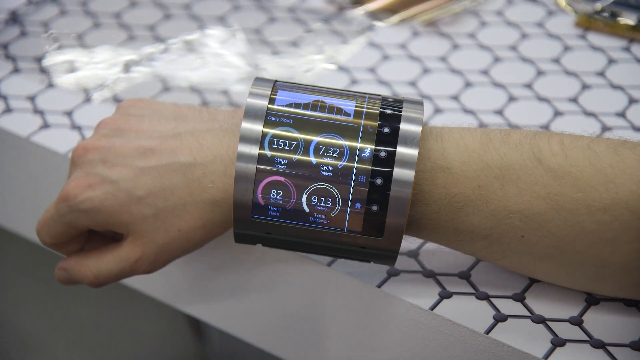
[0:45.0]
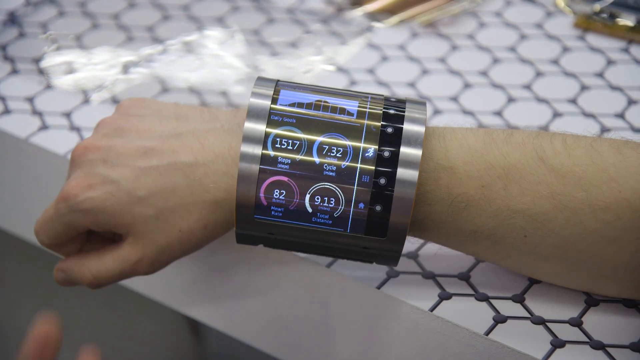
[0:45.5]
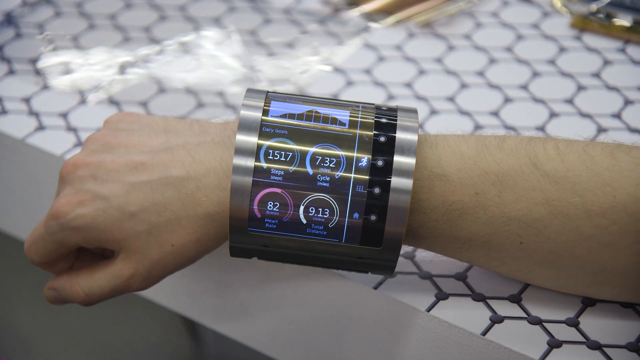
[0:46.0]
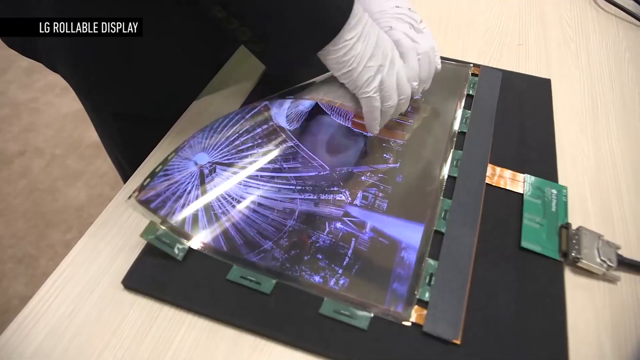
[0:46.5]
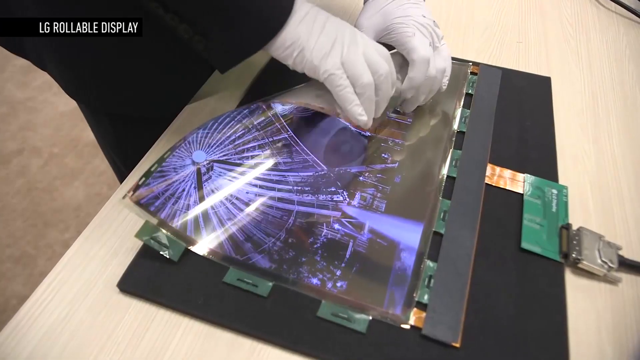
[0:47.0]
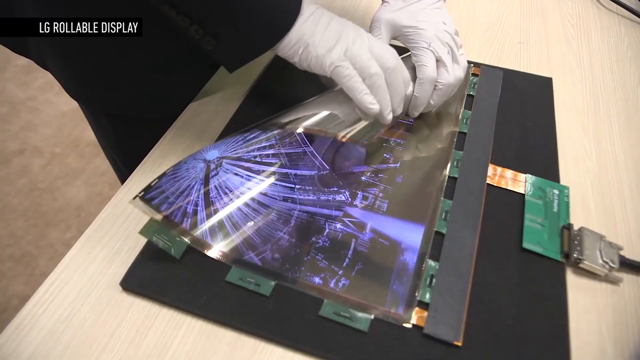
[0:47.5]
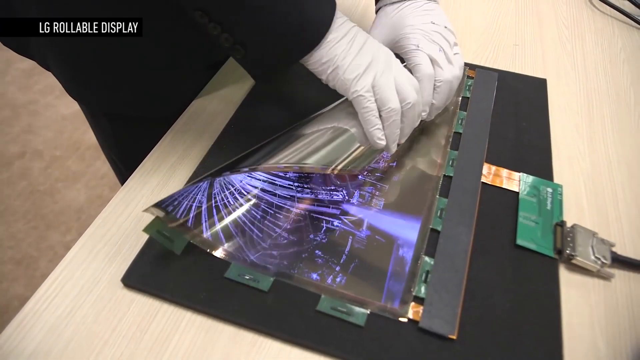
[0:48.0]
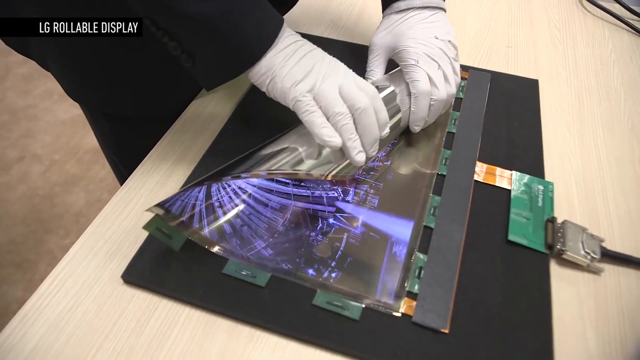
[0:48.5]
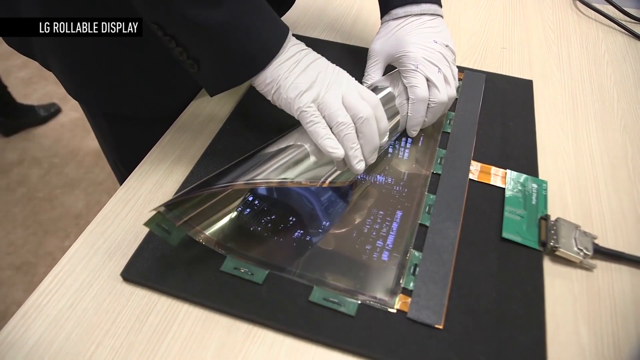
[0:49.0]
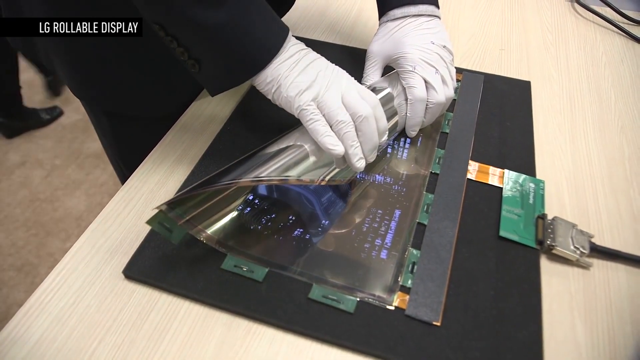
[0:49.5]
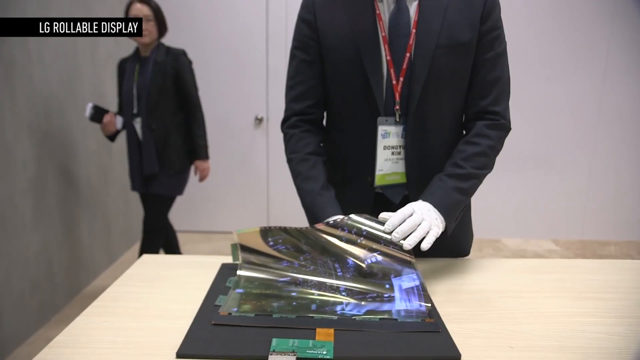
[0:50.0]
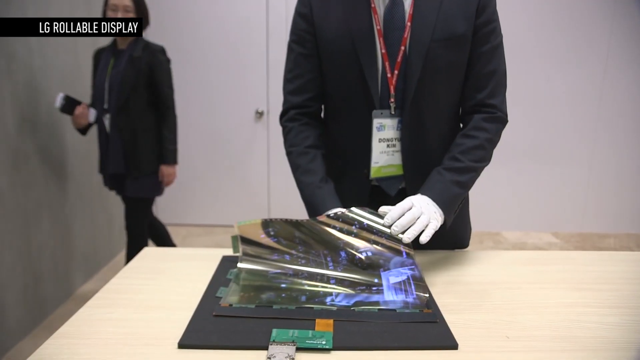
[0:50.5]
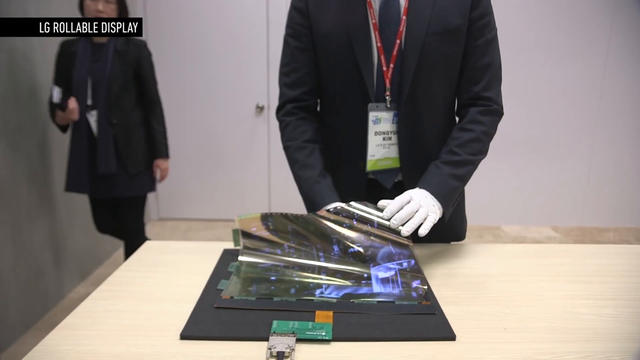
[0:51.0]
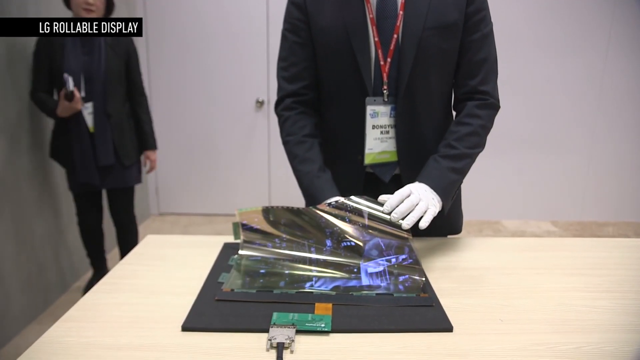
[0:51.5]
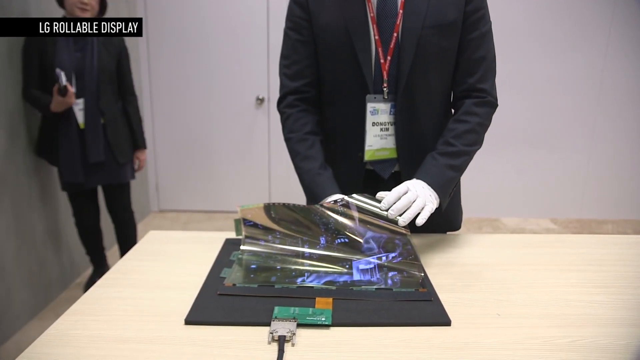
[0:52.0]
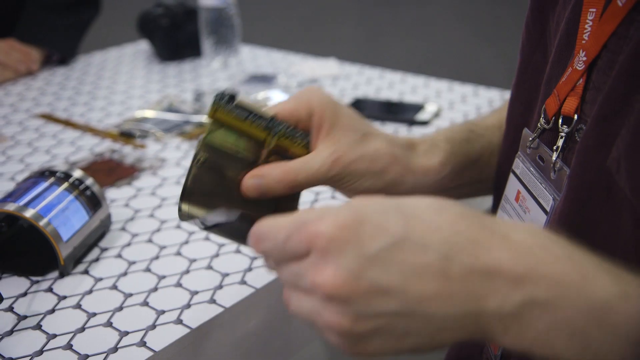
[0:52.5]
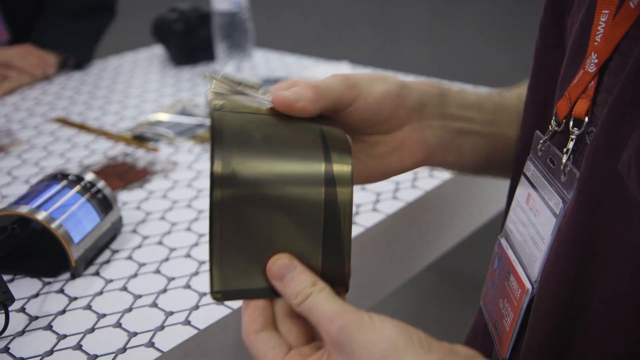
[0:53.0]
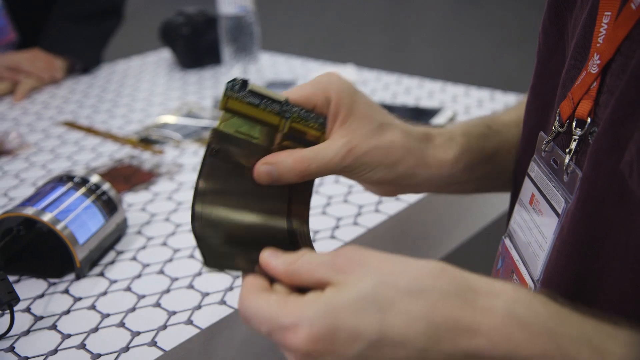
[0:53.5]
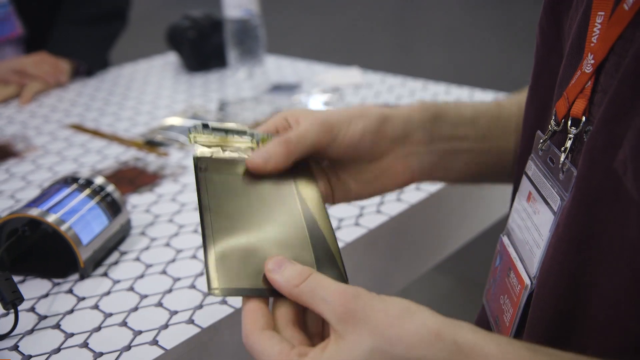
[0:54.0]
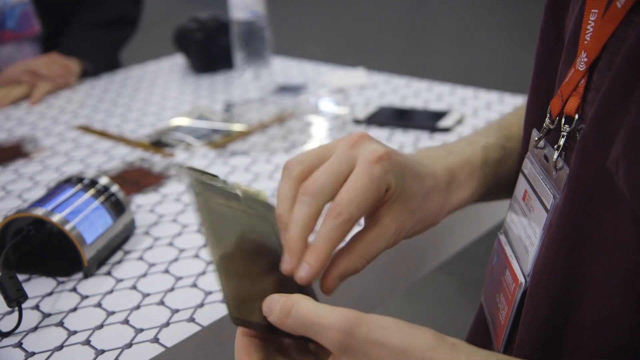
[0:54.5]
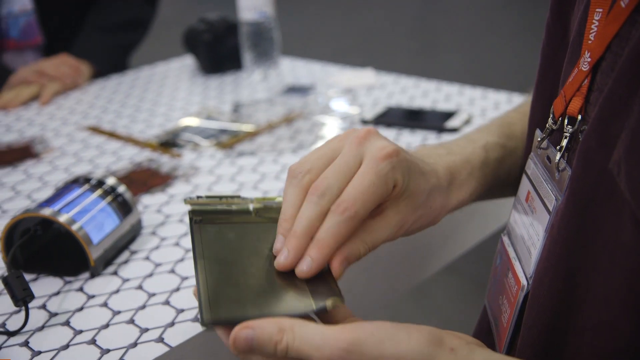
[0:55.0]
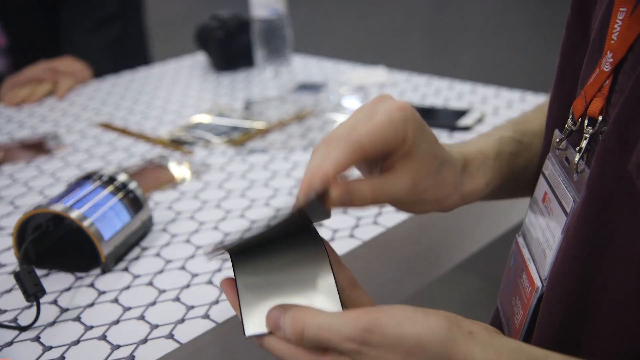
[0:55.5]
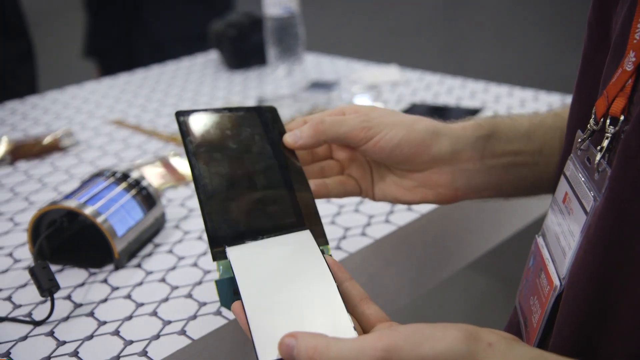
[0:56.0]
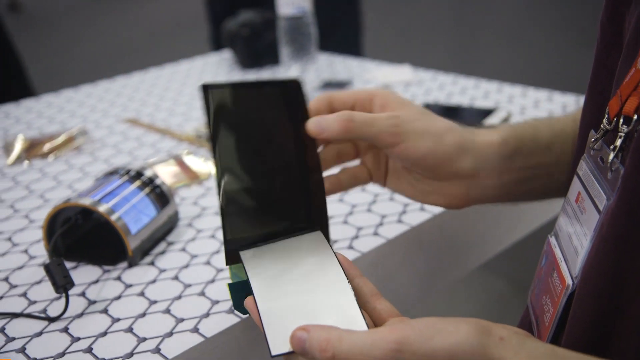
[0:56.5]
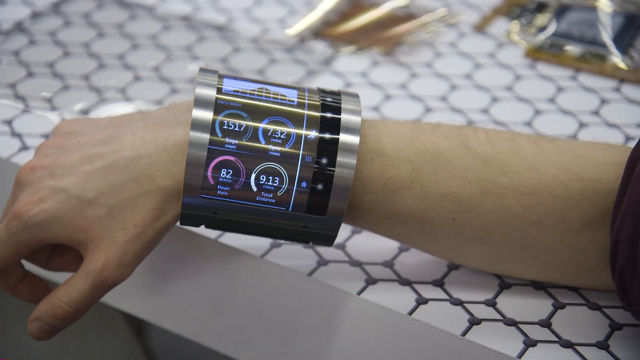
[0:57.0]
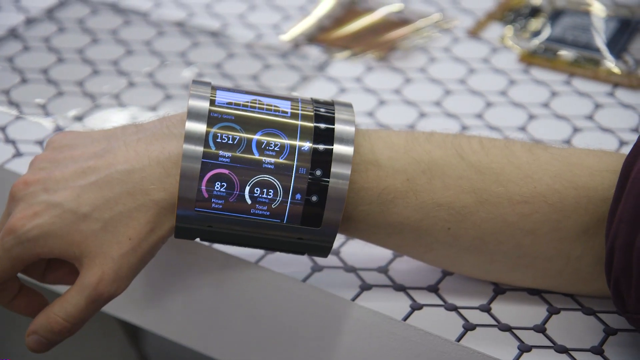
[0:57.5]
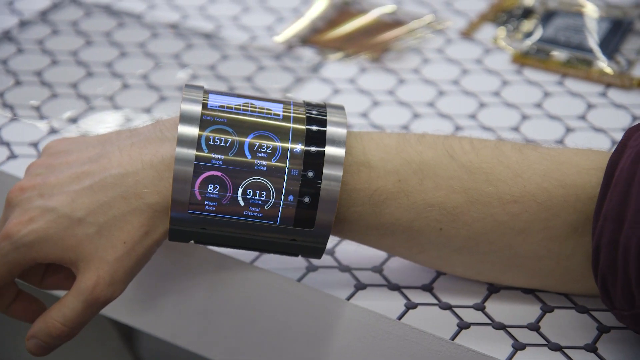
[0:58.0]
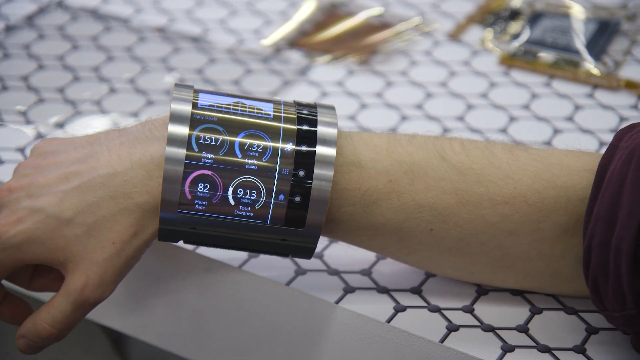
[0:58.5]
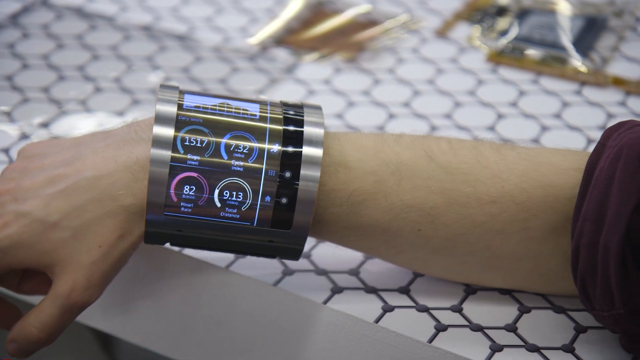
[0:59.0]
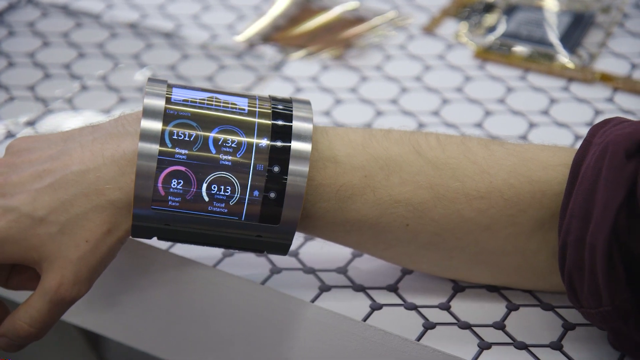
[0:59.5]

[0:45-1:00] A man rests his arm on a white table with a wristband on it. The wristband is very wide and displays many different graphs and technological functions, including a bunch of circle graphs. The video then shows how it was made: the material that the graphs and technical displays are on can be rolled up without cracking, it just bends, with nothing breakable. A man wearing a black suit and white rubber gloves rolls up the screen material that goes inside the wristband.